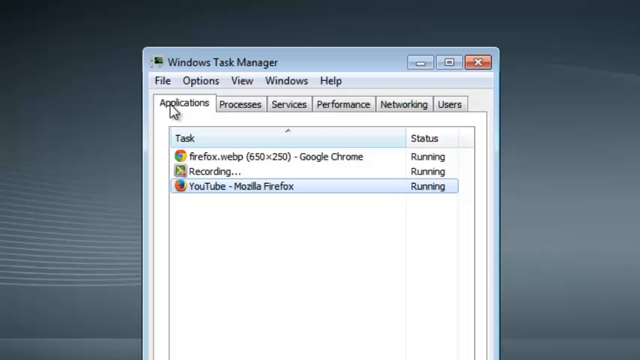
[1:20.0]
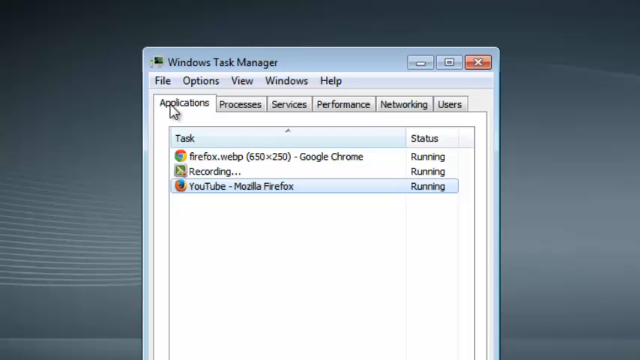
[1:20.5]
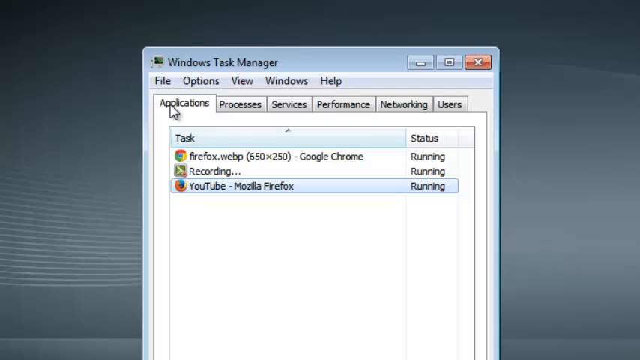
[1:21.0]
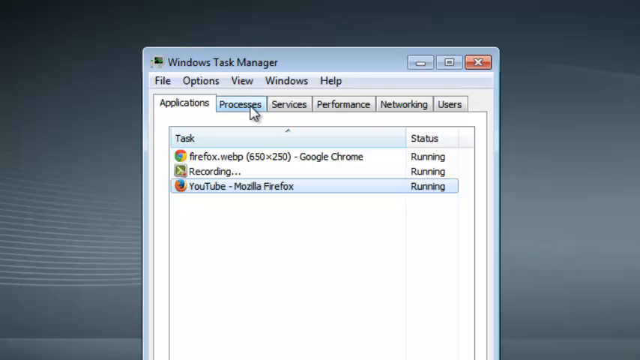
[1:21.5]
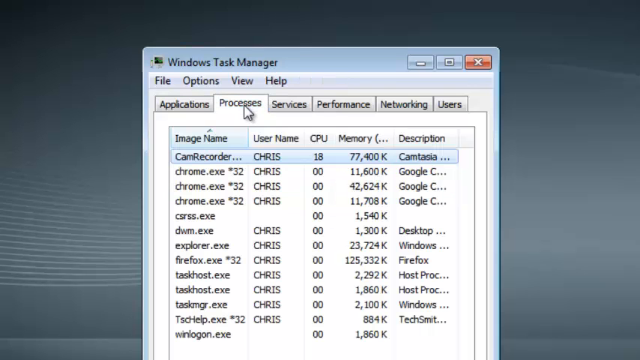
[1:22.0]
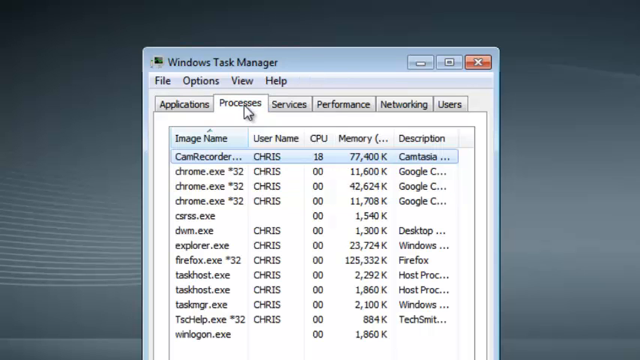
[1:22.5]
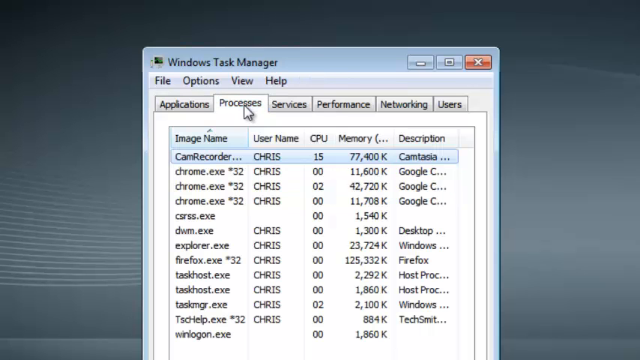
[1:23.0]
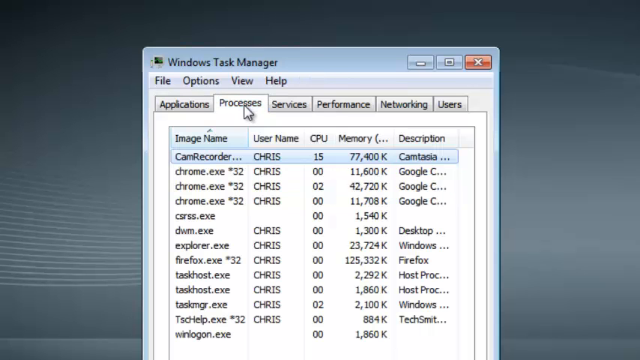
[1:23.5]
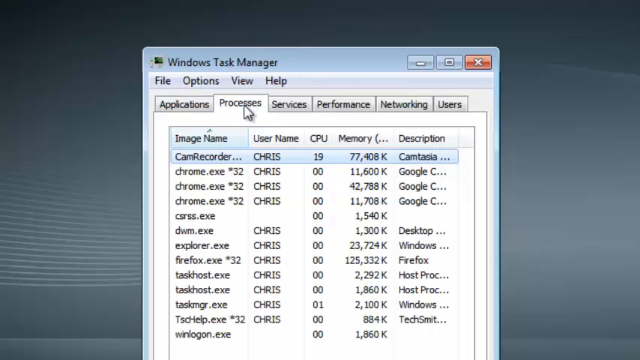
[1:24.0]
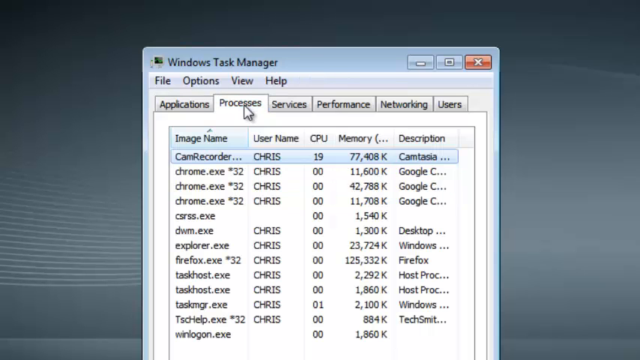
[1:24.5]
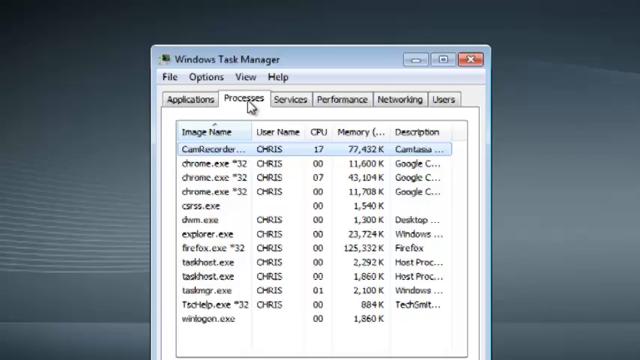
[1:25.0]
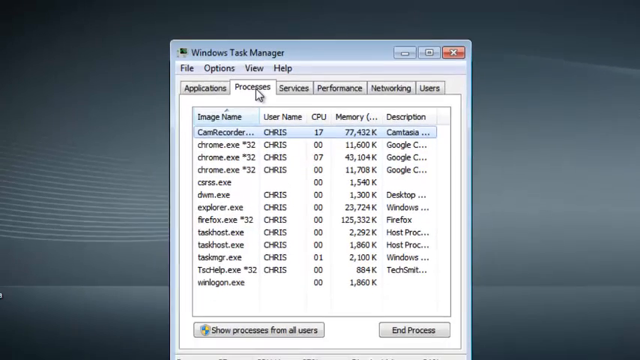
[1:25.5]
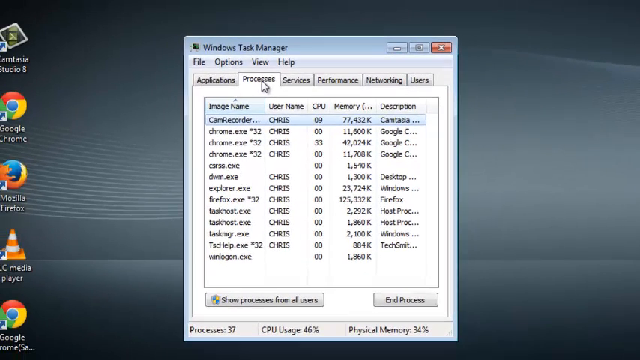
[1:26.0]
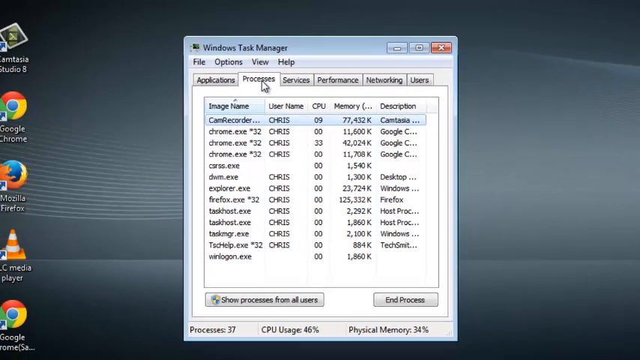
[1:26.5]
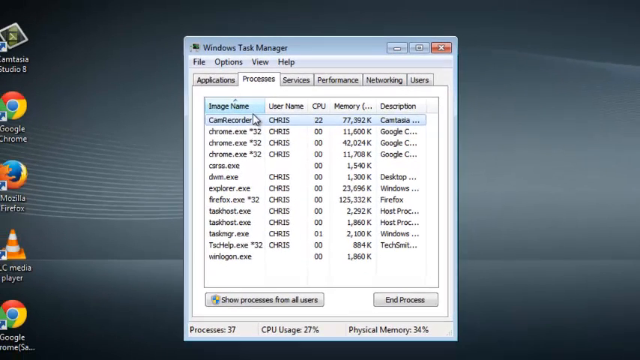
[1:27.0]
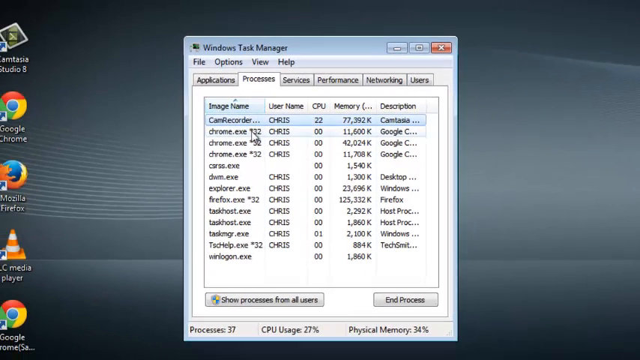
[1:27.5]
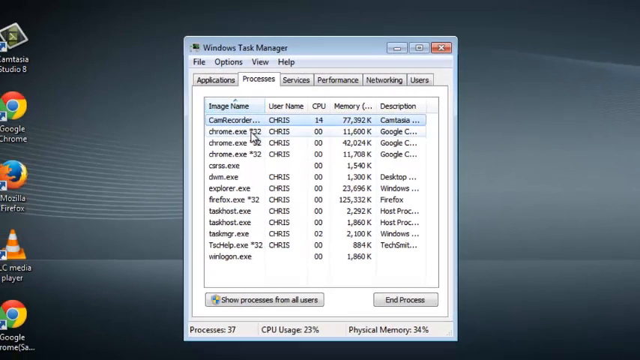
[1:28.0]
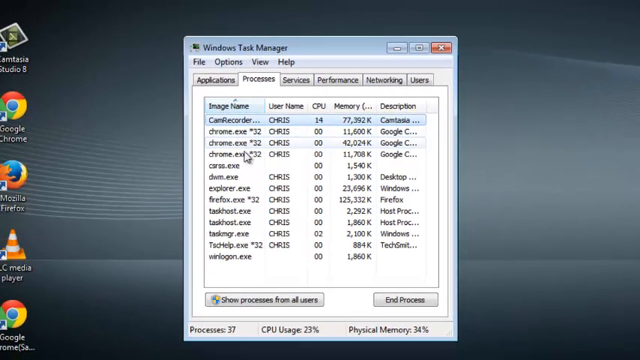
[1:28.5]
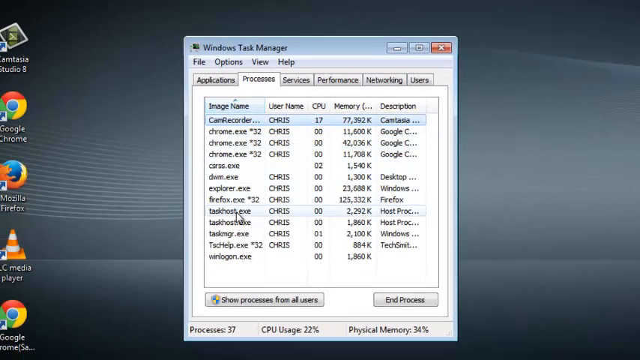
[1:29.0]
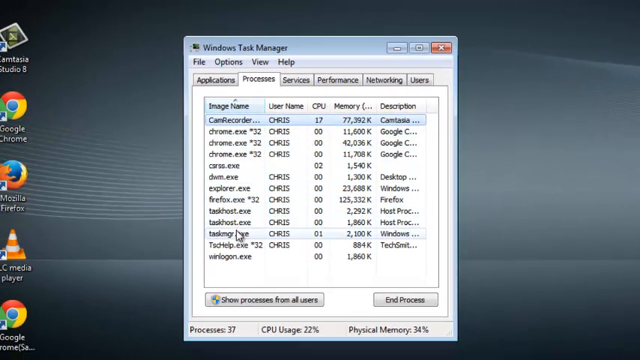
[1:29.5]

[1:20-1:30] The view is still zoomed in on the Applications menu of the old Windows Task Manager, positioned in the center of the screen, with the desktop background visible in the margins: a dark, blackish gradient with some waves in the pattern. The user selects the Processes menu, which lists several processes in a chart with columns for image name, user name, CPU, memory usage and description. The view zooms back out to show the full Task Manager, and the applications on the desktop are visible on the left of the screen. He selects the first process, and the mouse moves toward the bottom of the screen.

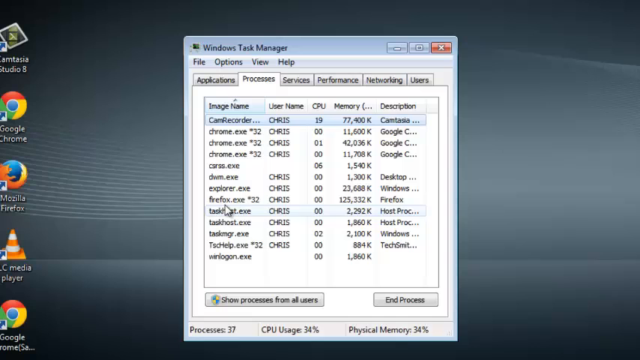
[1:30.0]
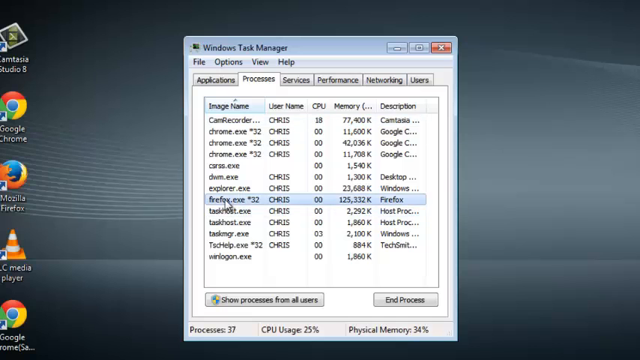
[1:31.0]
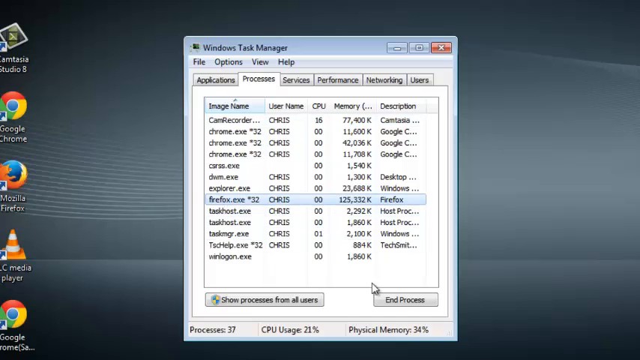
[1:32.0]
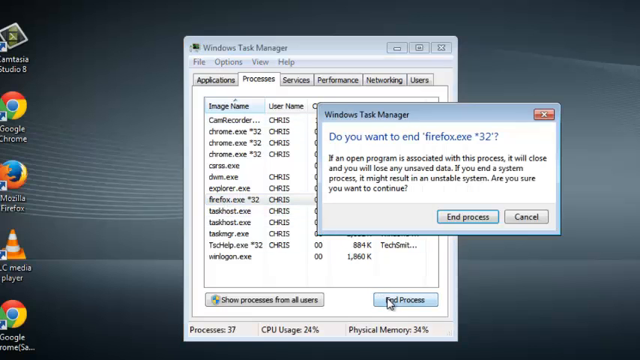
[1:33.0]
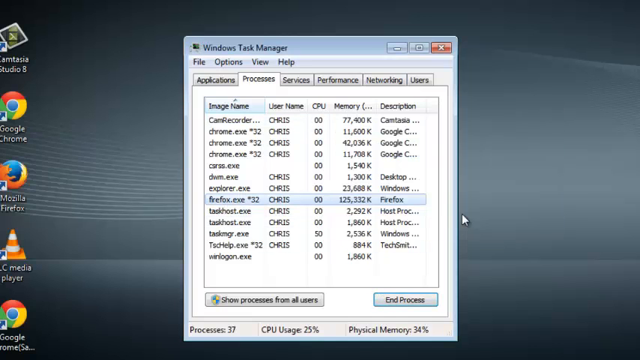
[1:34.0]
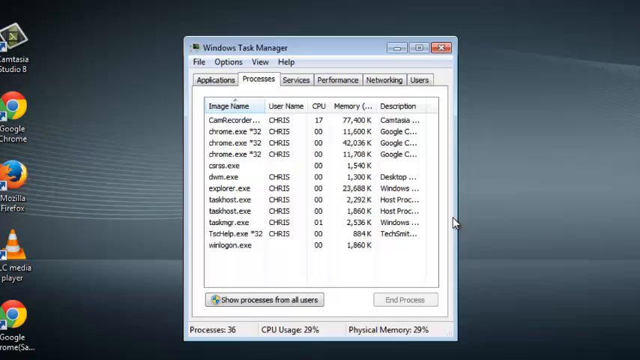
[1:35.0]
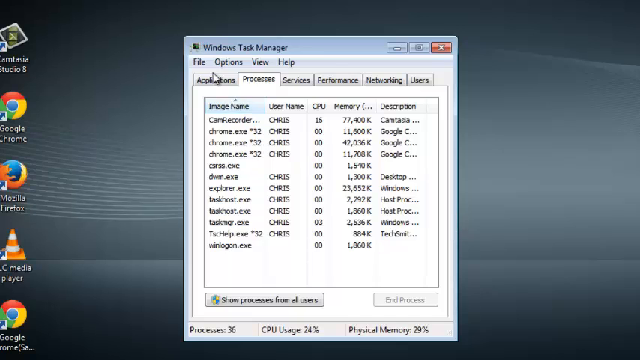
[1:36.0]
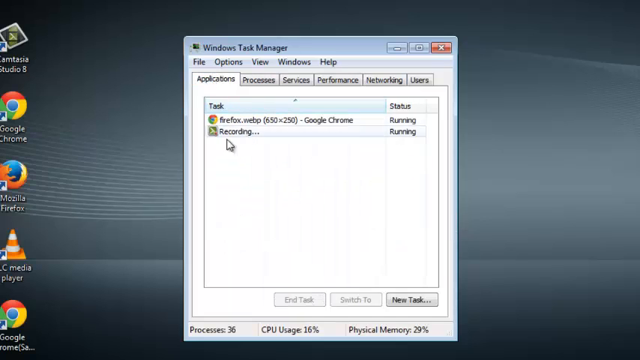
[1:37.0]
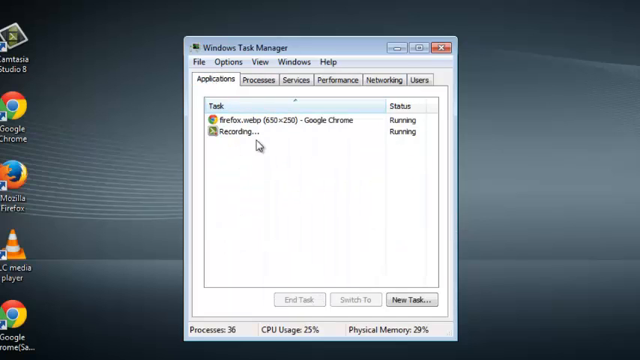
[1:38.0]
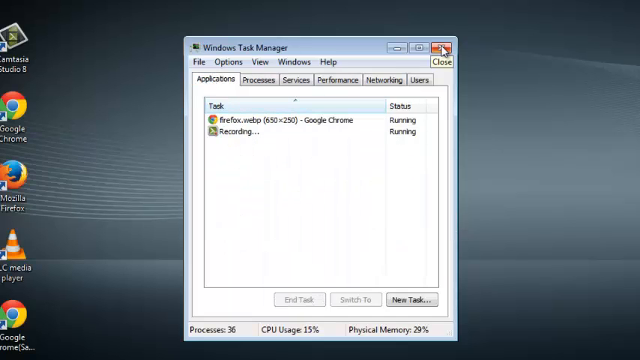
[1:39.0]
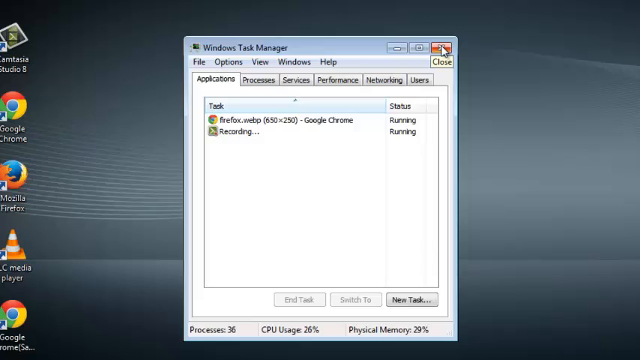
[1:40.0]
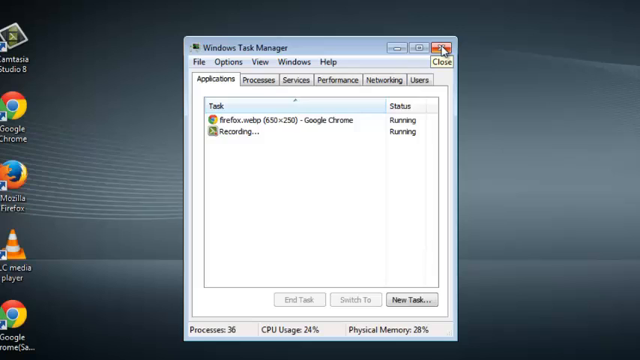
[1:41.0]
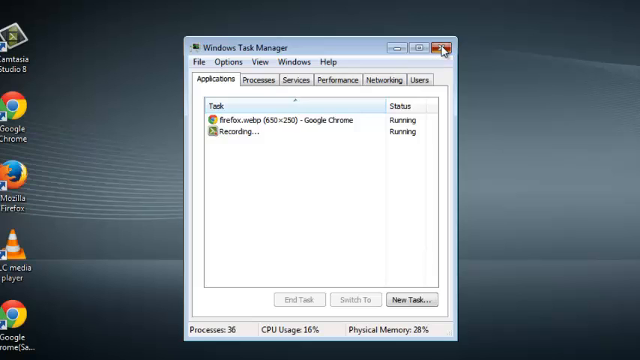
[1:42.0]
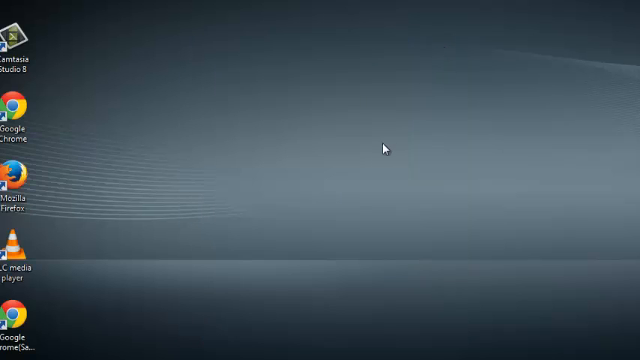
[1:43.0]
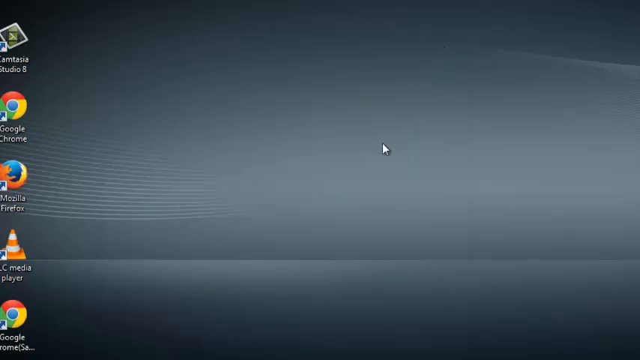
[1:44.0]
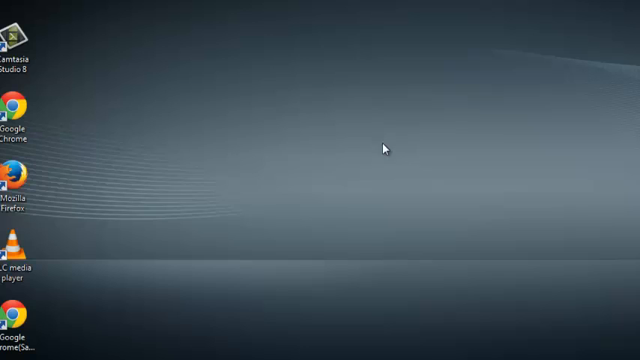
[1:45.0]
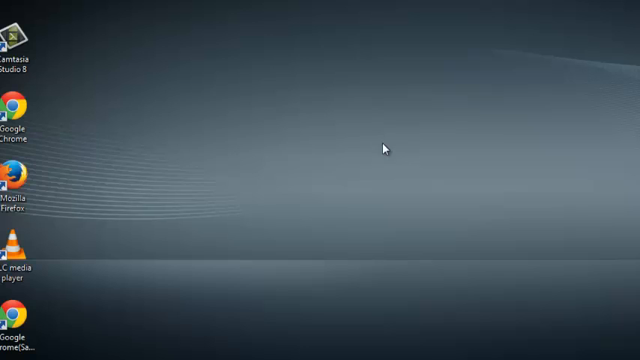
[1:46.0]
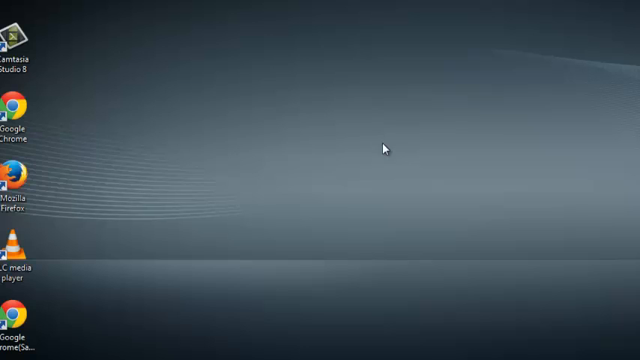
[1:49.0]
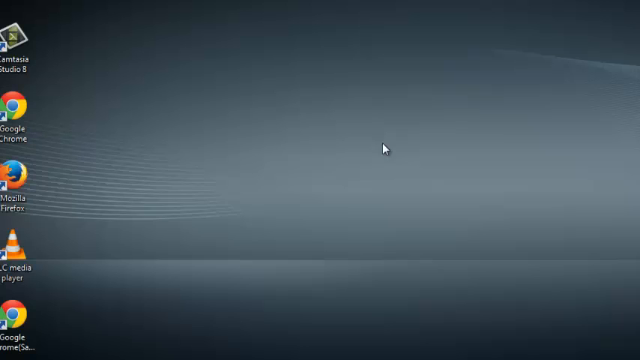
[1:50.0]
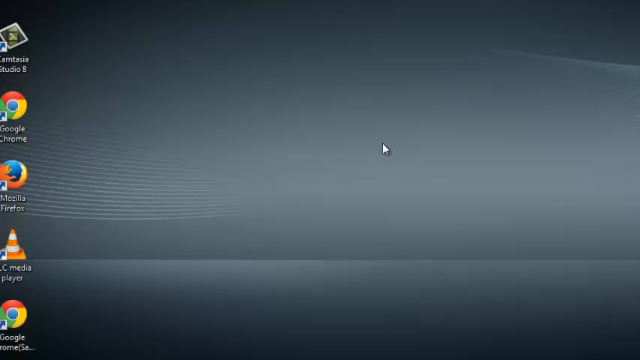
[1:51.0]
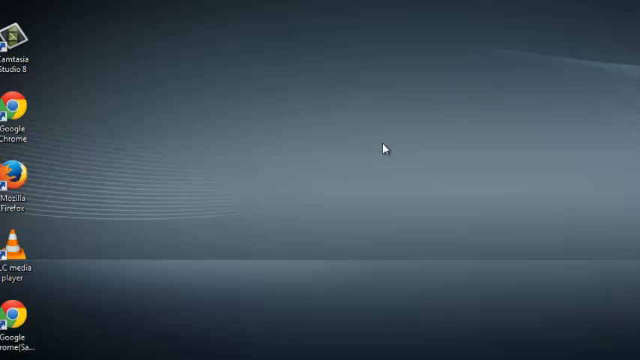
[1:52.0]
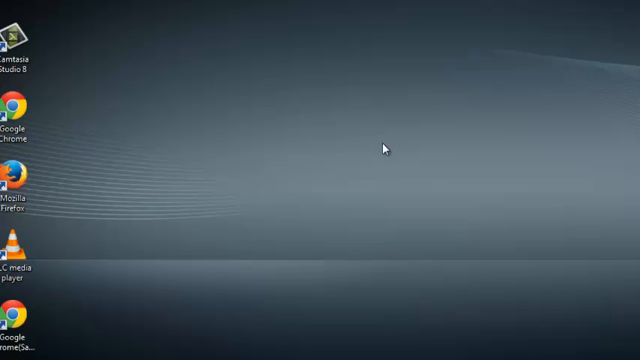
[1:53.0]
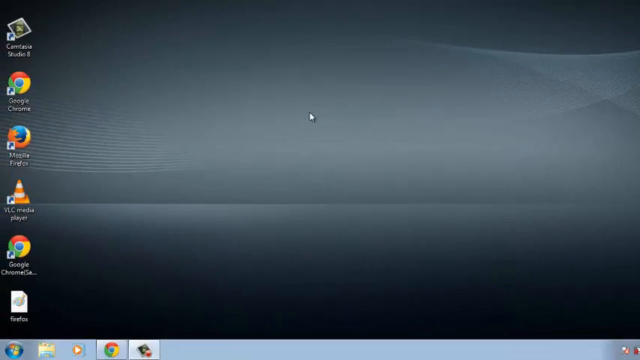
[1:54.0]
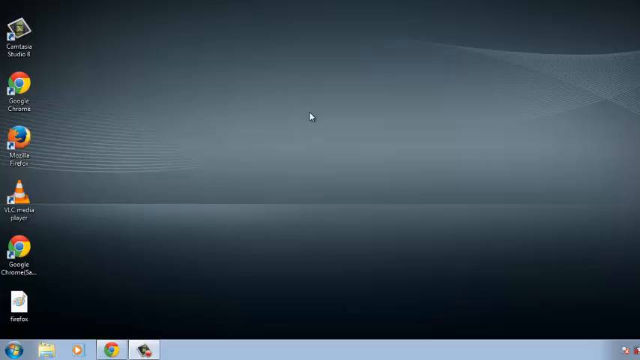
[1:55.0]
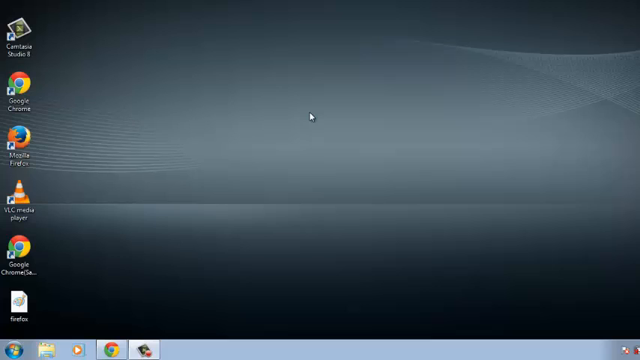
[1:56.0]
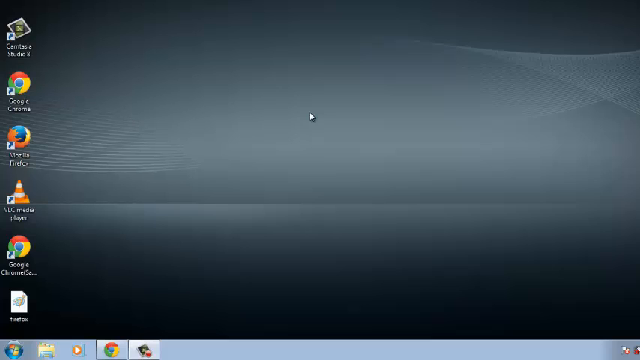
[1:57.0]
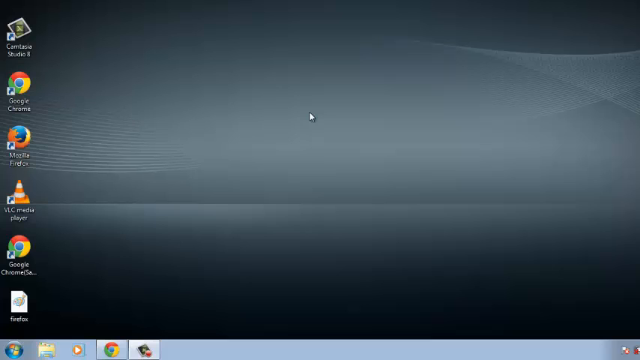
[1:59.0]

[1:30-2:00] The Processes menu of the old Windows Task Manager is centered on the screen over a dark gradient background of black and slightly gray with wave-like patterns, and the single column of applications is on the left. The first item on the Processes page is highlighted and the mouse hovers over the middle. The user selects one of the processes in the middle and clicks the "End Process" button at the bottom right. A confirmation window pops up asking "Do you want to end Firefox.exe?", and he clicks the "End Process" button at its bottom right; the process is removed from the Processes tab. He clicks Applications, where only two applications are running. He then clicks the big red X at the top right of the Task Manager, clicks Close, and the window disappears, revealing the desktop. The mouse hovers around the middle of the screen, and the view zooms out to show the whole desktop with the old Windows panel at the bottom, the single column of applications on the left, and the same background.